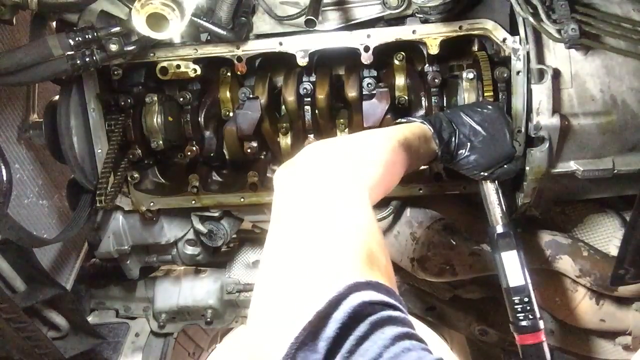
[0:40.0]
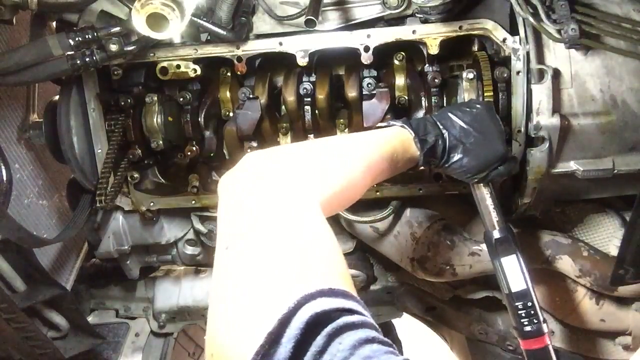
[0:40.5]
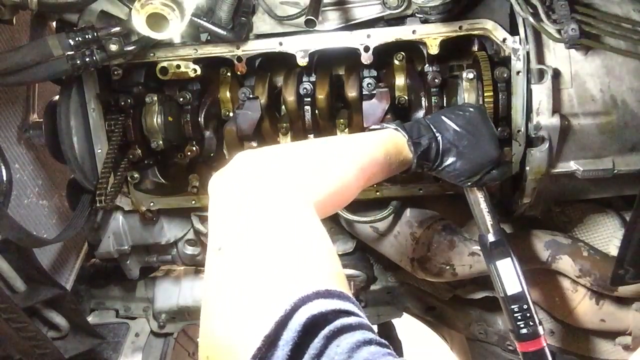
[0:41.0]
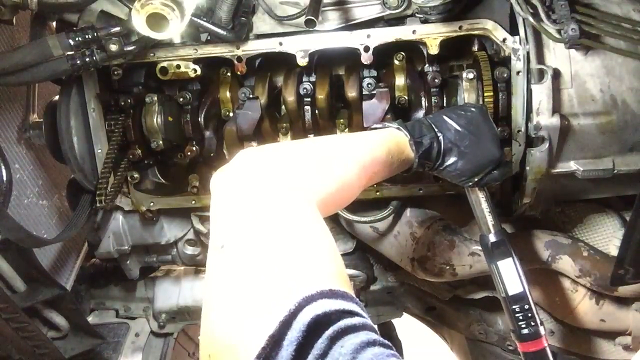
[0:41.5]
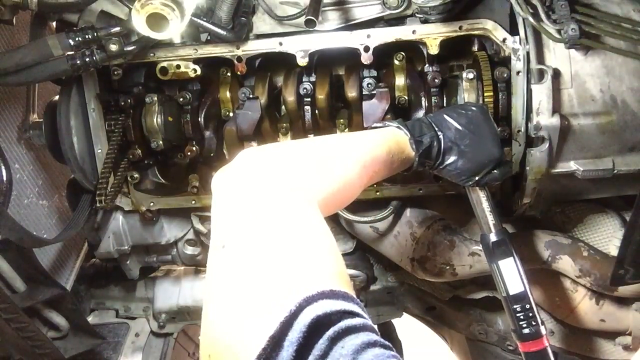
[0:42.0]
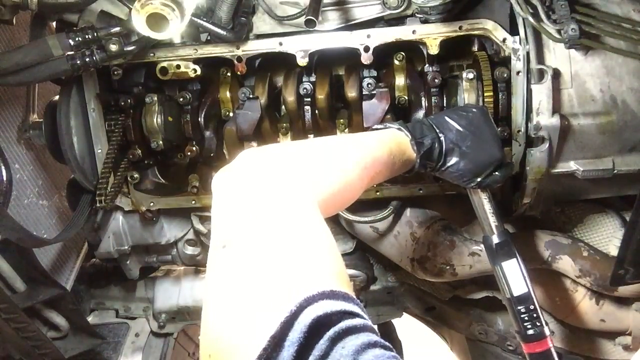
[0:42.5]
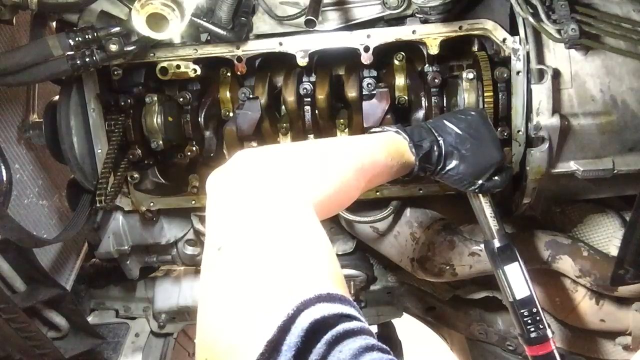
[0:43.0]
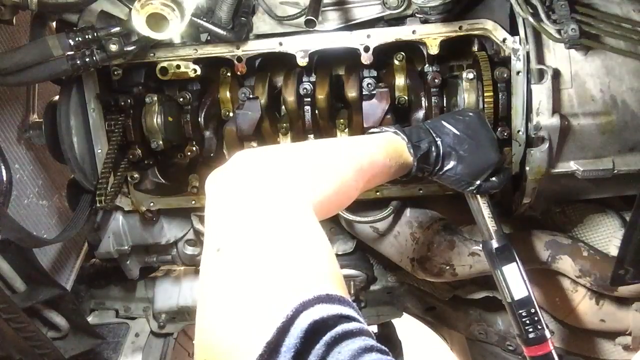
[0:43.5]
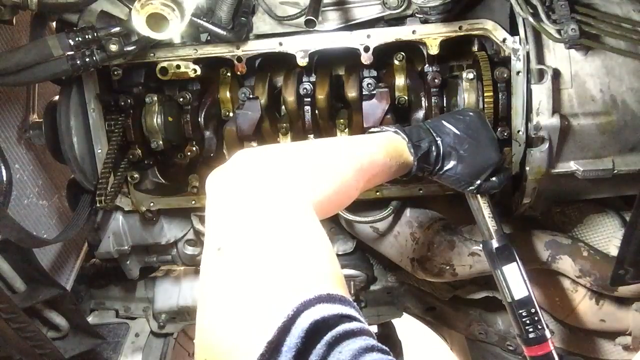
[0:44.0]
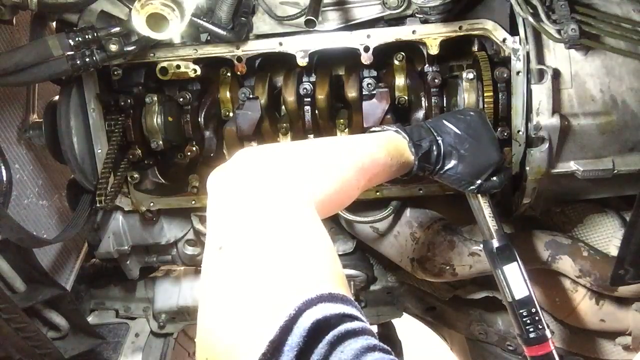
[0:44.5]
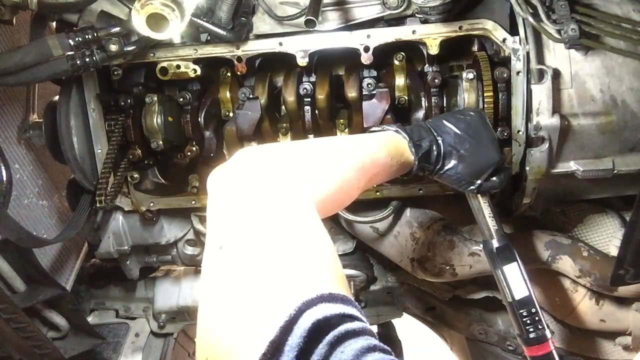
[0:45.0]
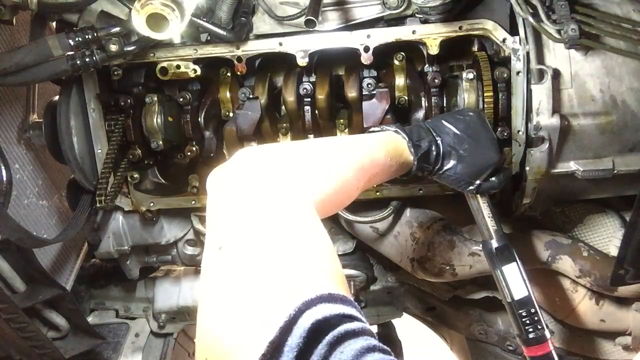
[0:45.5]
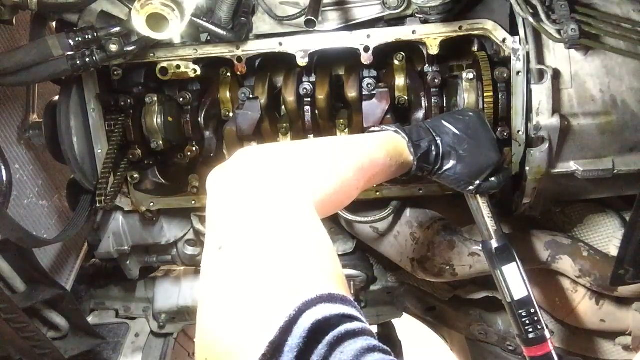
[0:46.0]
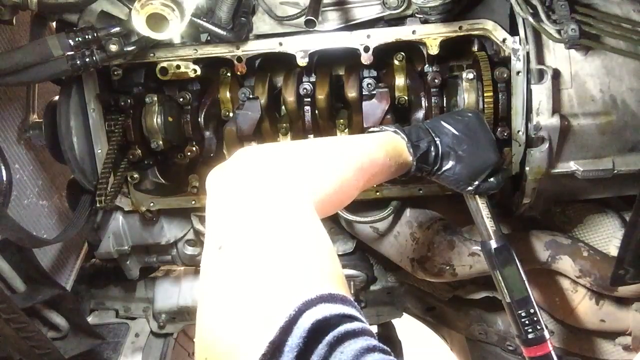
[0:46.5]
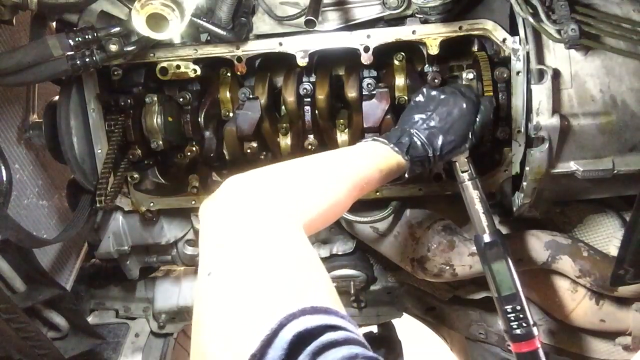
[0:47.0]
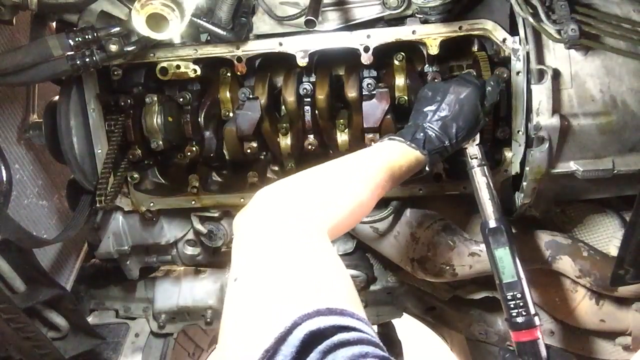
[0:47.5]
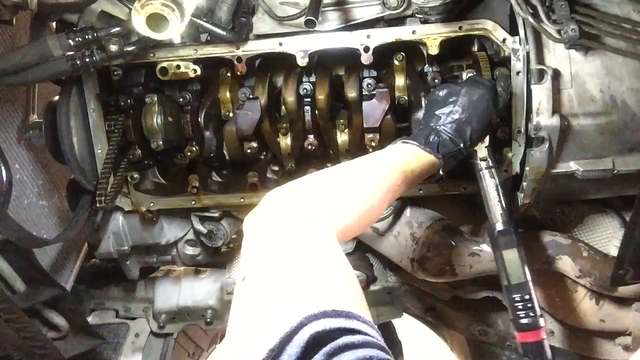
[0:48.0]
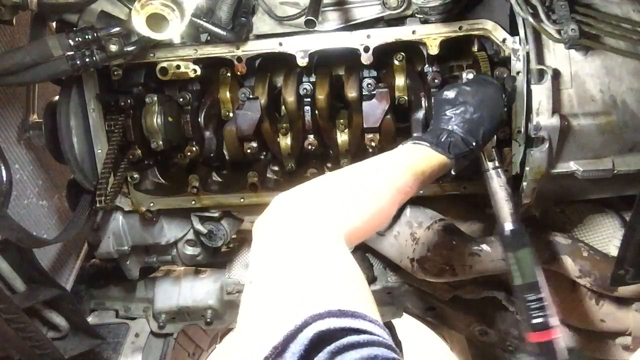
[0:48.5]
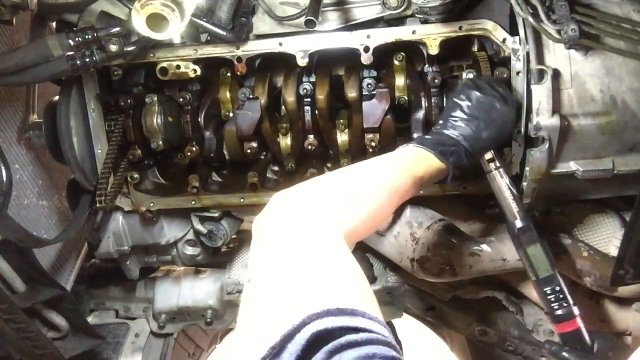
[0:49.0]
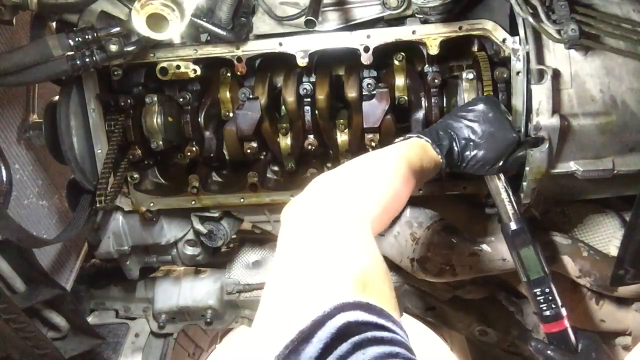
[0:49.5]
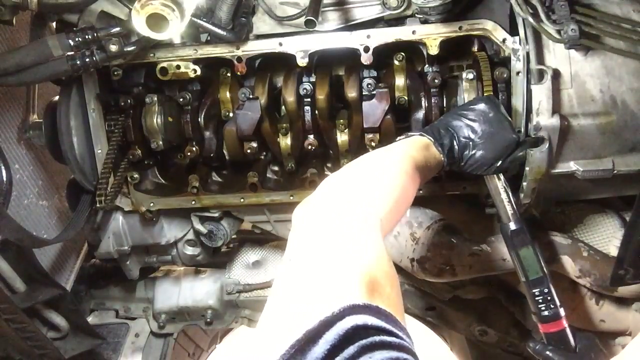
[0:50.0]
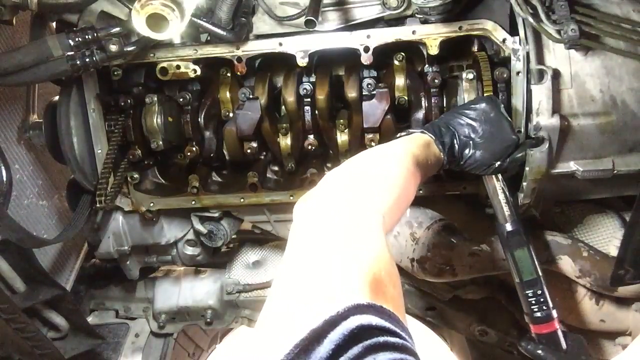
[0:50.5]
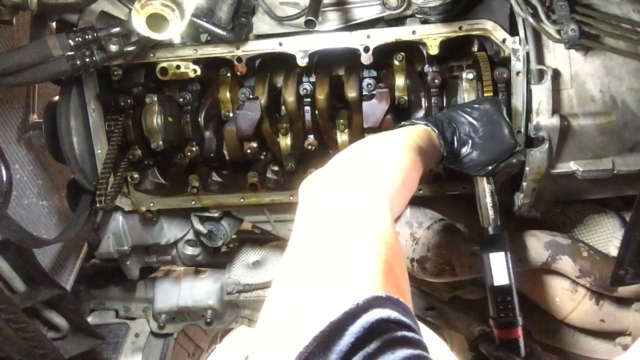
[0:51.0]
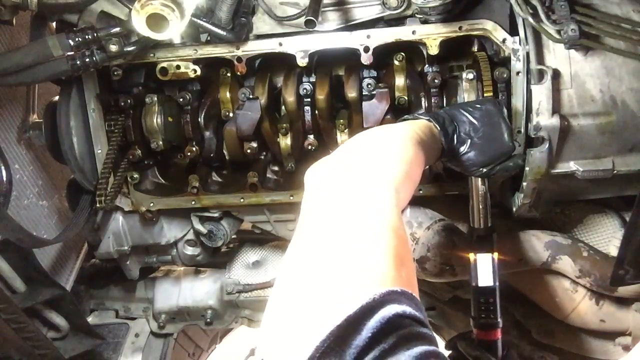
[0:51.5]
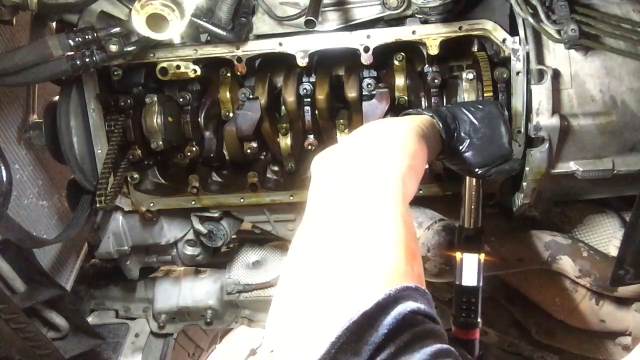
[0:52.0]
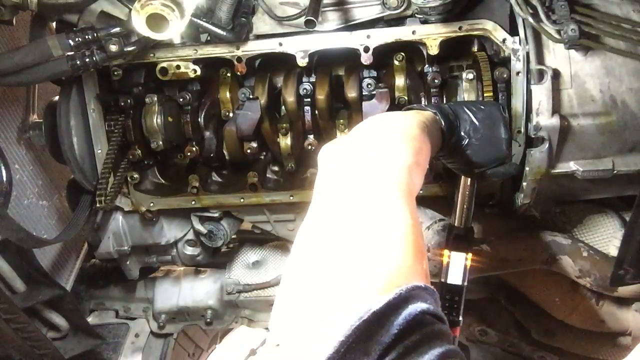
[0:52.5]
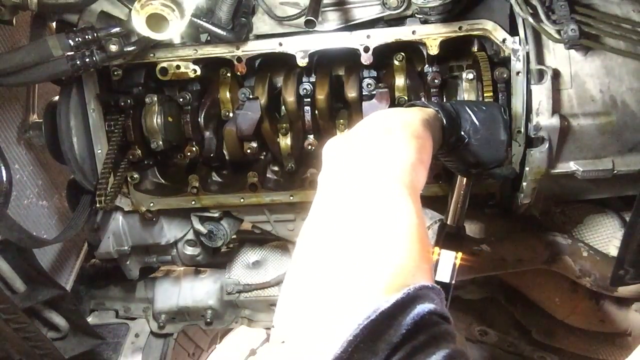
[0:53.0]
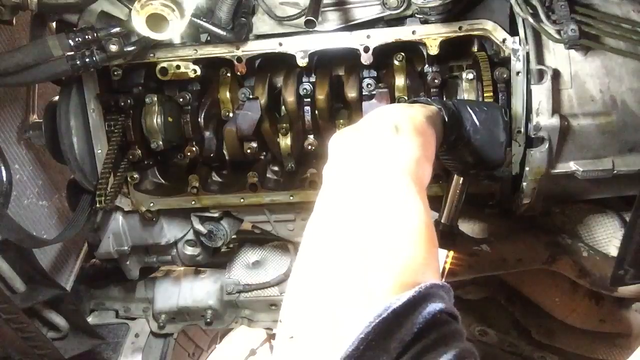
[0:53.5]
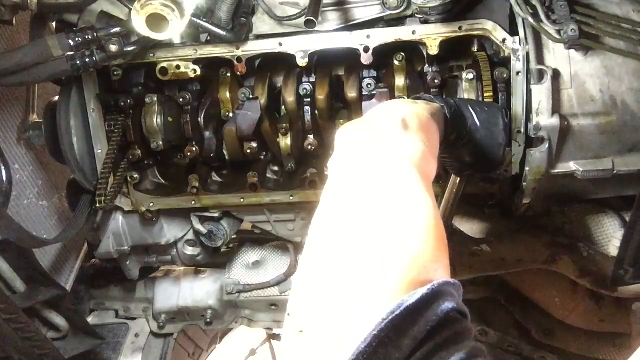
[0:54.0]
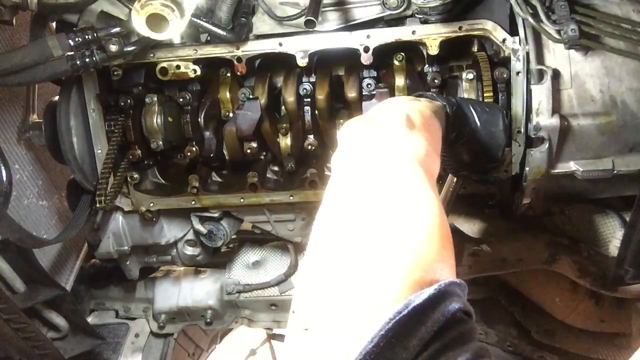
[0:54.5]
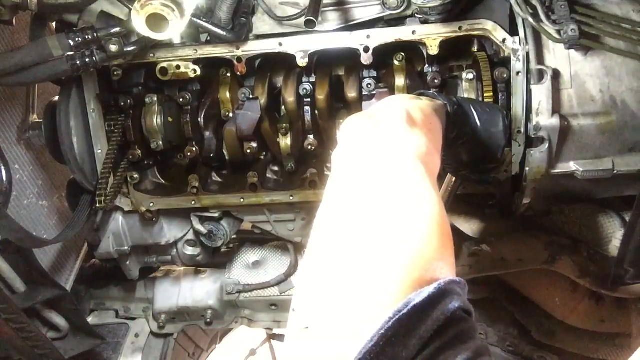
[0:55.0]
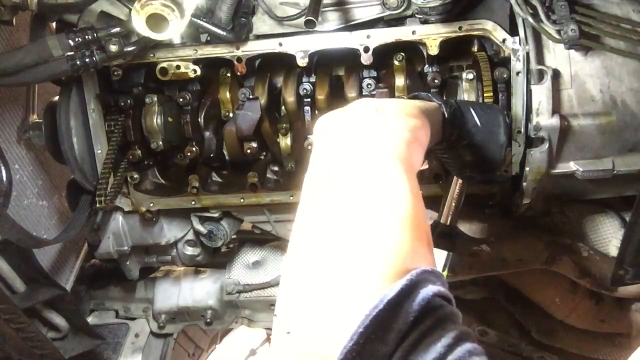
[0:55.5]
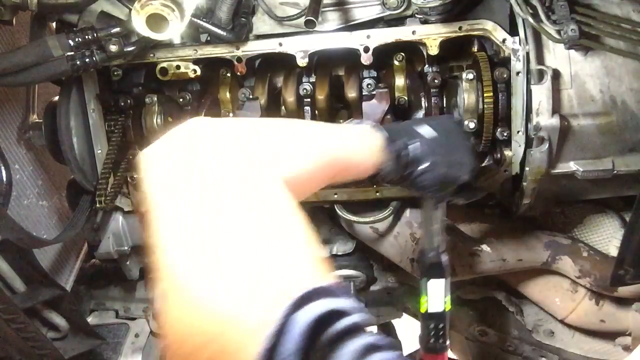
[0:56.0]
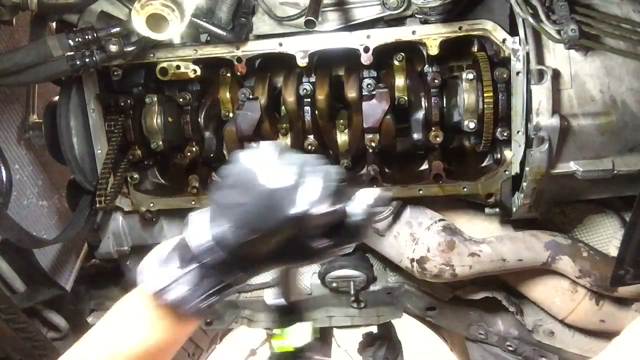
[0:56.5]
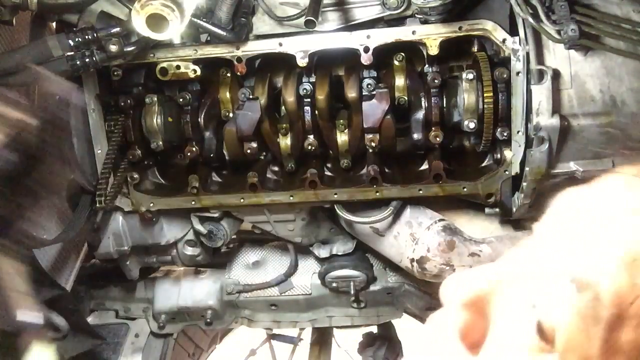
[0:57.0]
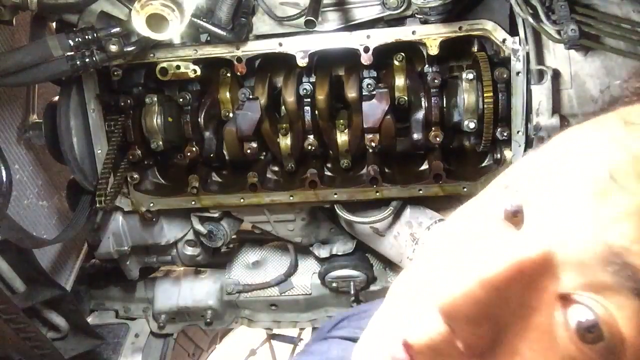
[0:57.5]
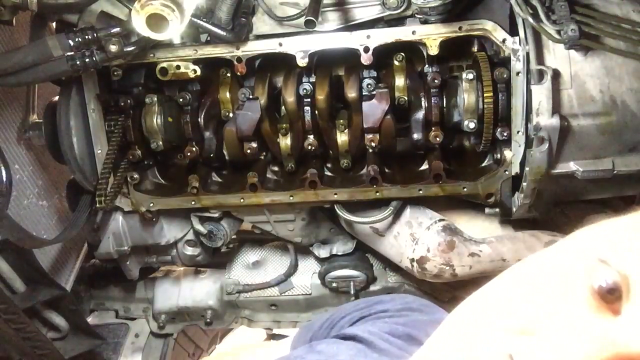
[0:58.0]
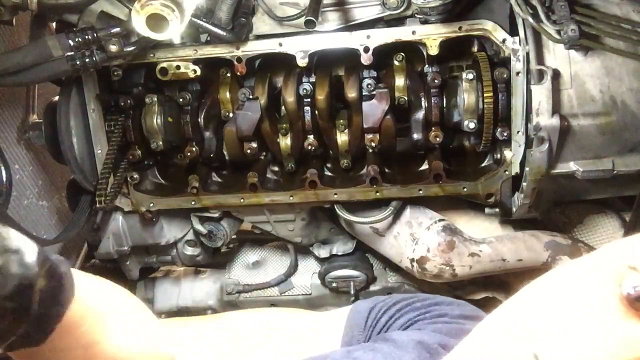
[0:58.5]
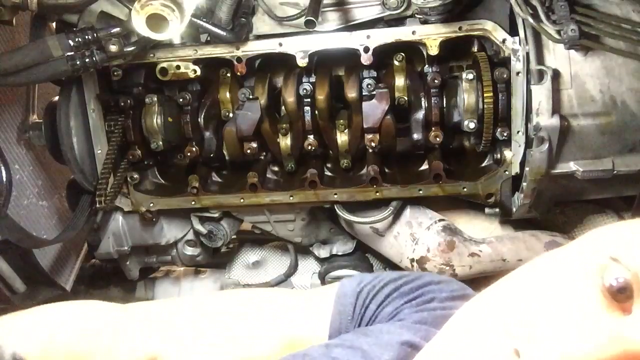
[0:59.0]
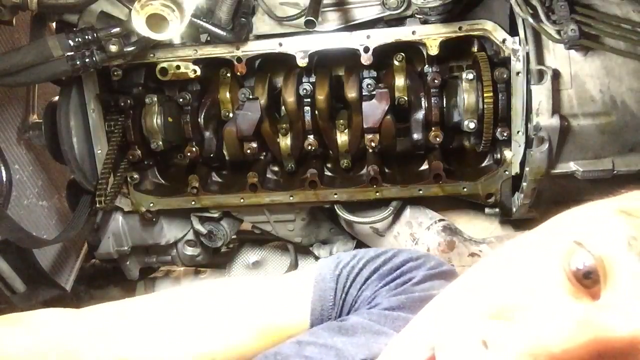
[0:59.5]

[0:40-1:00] The person seems to hesitate a little, possibly checking something; the device probably shows a reading on its readout, but a glare from the camera lighting makes it impossible to read. The person apparently puts the device back and rotates something within the engine clockwise again, probably about an eighth of a turn, then releases the device from the motor. Their face then comes into the lower right of the screen and they look directly into the camera. A bright light washes out the details of their face so it cannot be seen well, but they have brown eyes. The cylindrical device is no longer in the frame, and the person is probably talking to the camera.